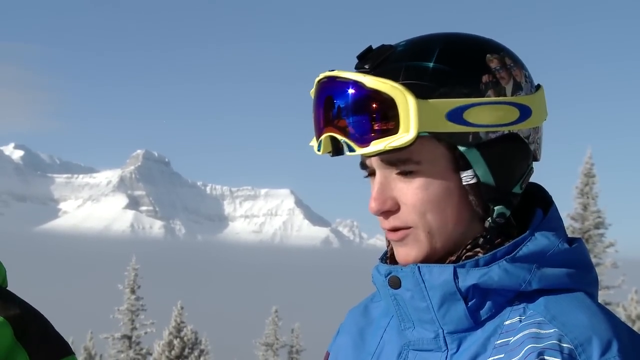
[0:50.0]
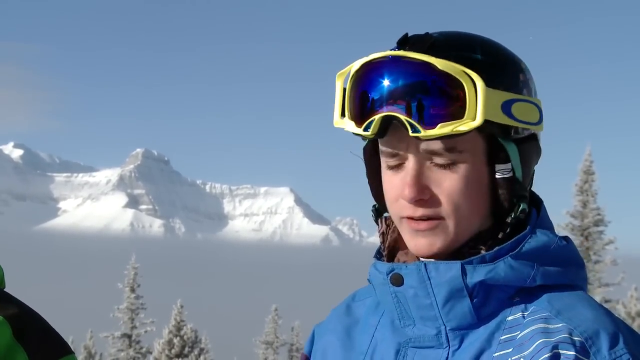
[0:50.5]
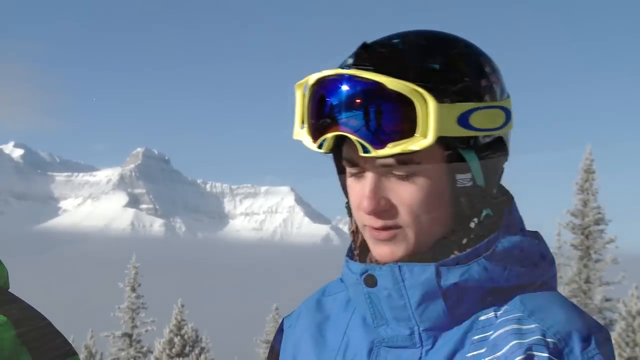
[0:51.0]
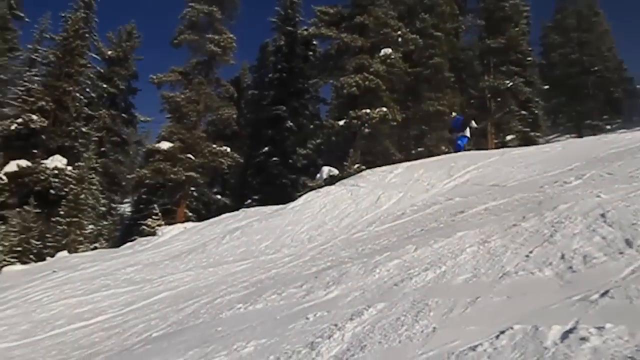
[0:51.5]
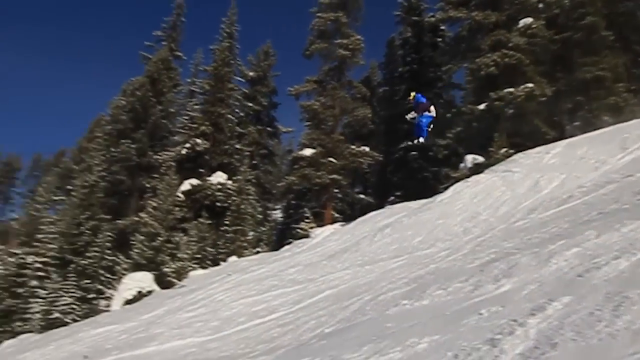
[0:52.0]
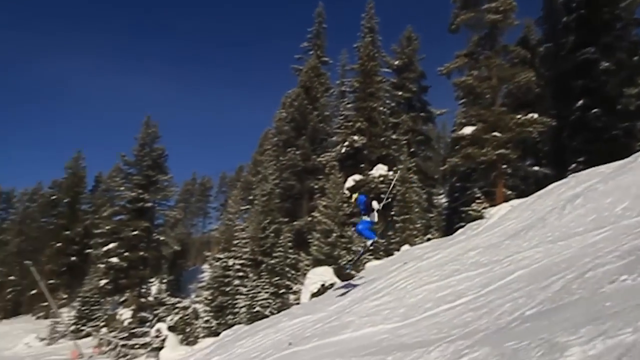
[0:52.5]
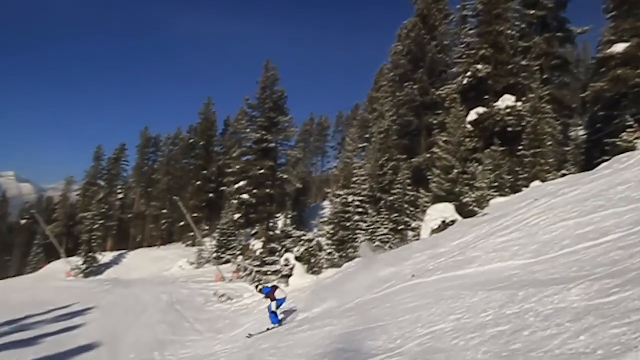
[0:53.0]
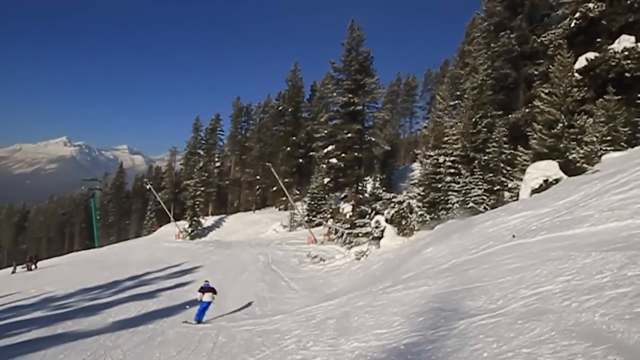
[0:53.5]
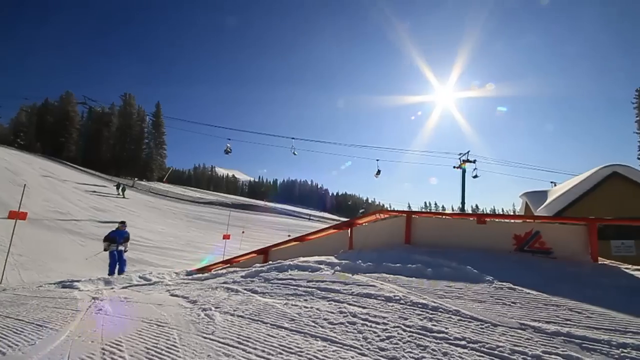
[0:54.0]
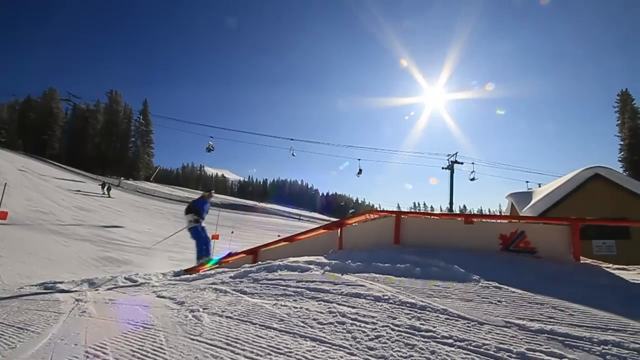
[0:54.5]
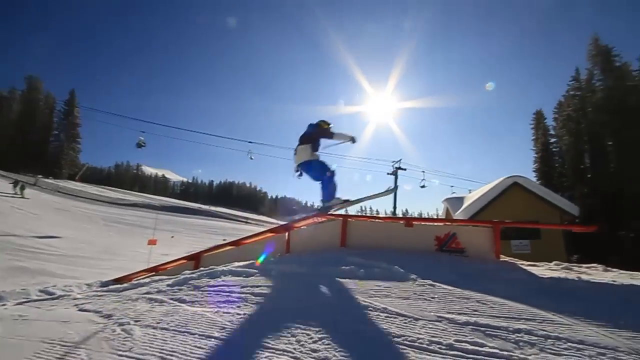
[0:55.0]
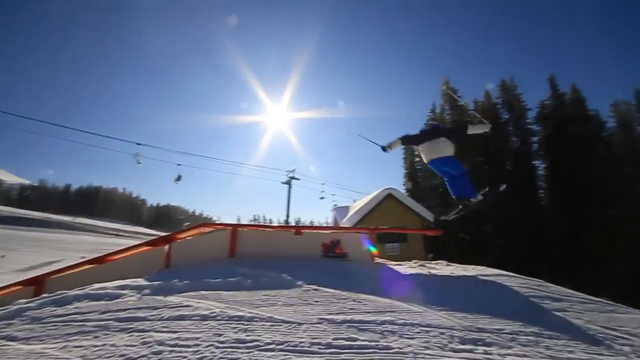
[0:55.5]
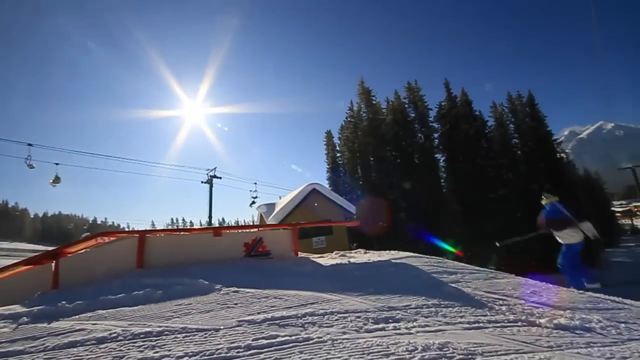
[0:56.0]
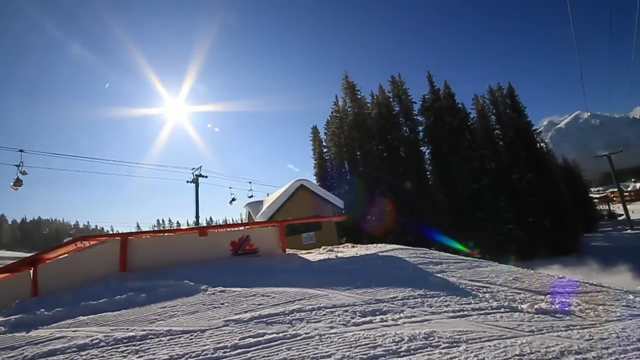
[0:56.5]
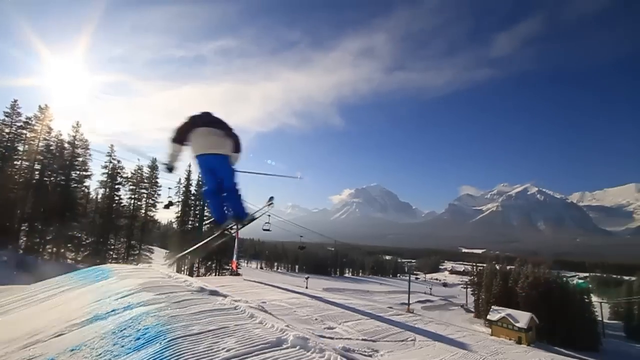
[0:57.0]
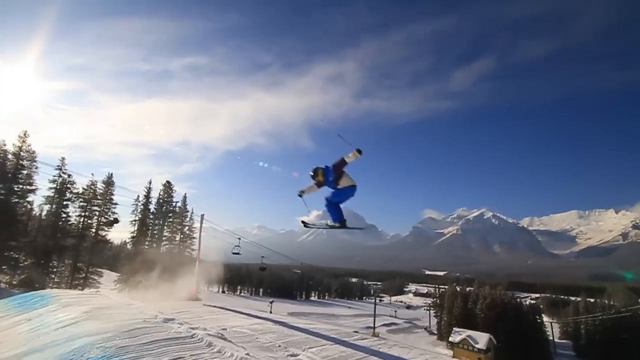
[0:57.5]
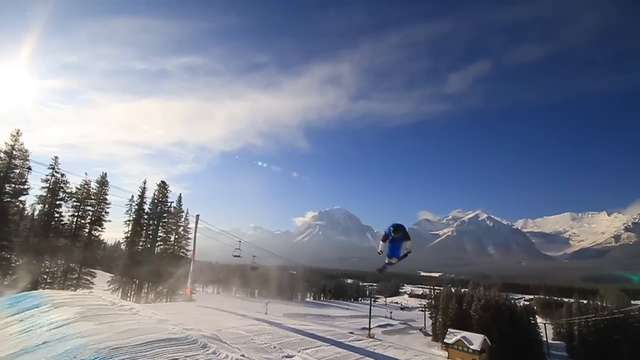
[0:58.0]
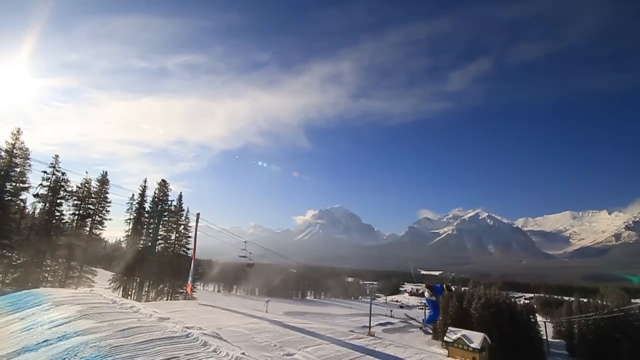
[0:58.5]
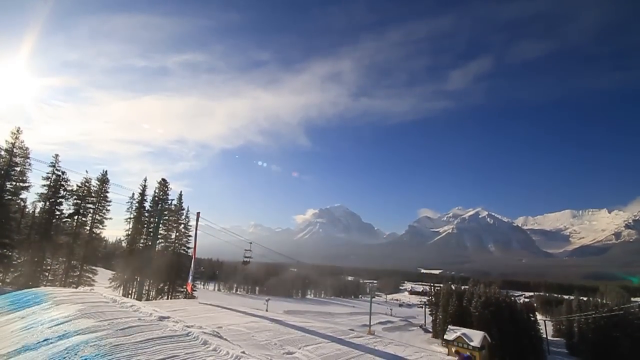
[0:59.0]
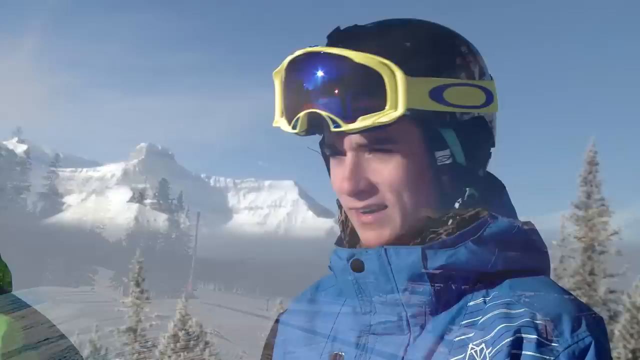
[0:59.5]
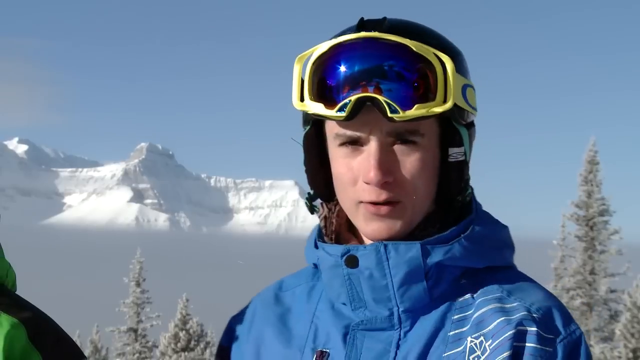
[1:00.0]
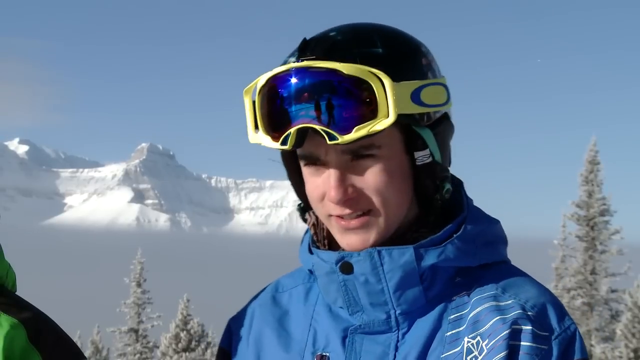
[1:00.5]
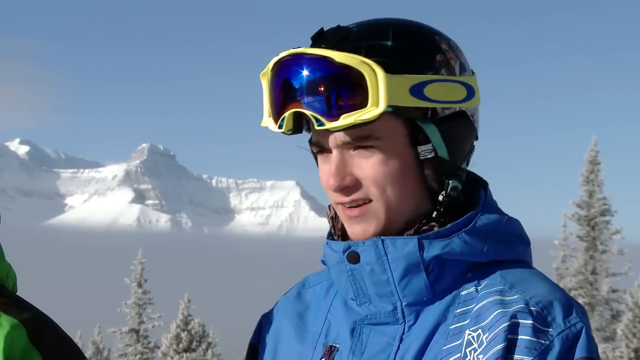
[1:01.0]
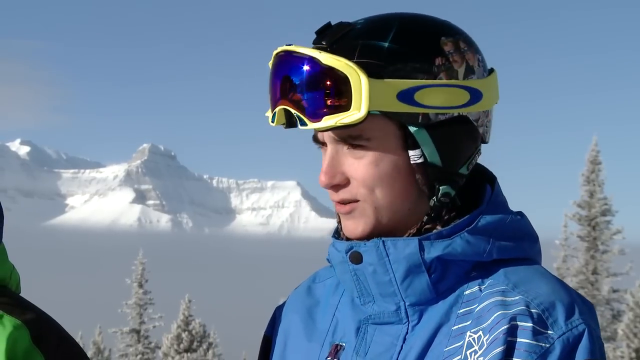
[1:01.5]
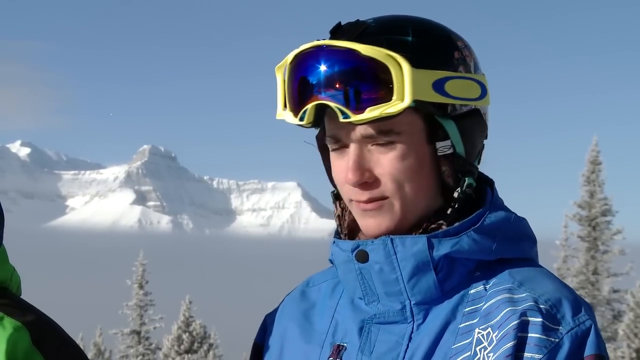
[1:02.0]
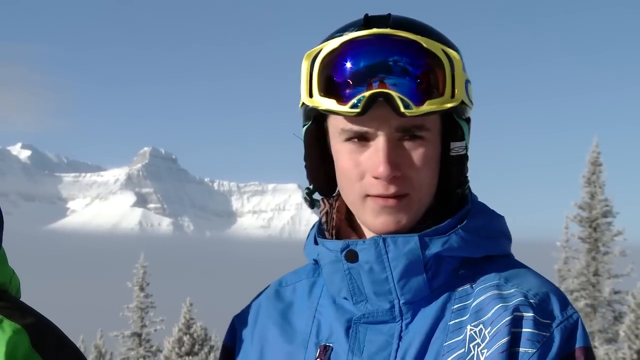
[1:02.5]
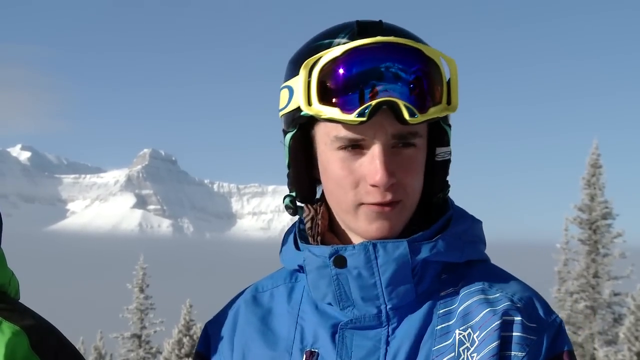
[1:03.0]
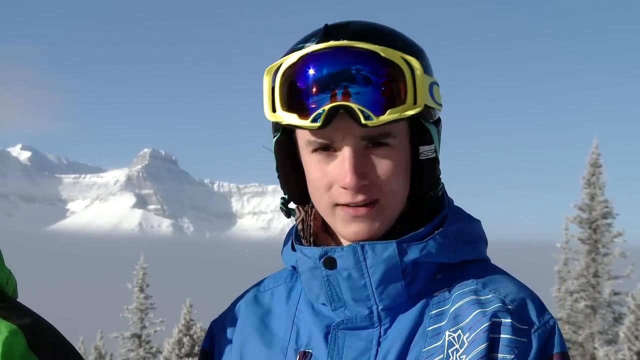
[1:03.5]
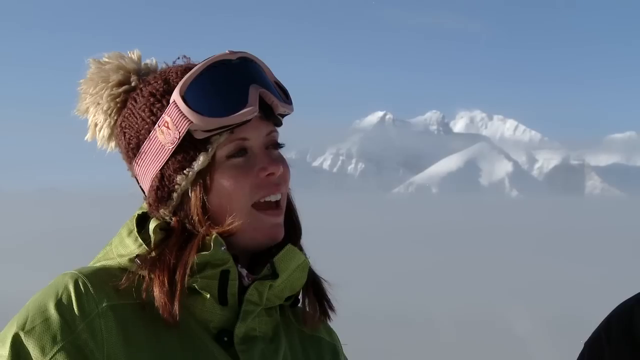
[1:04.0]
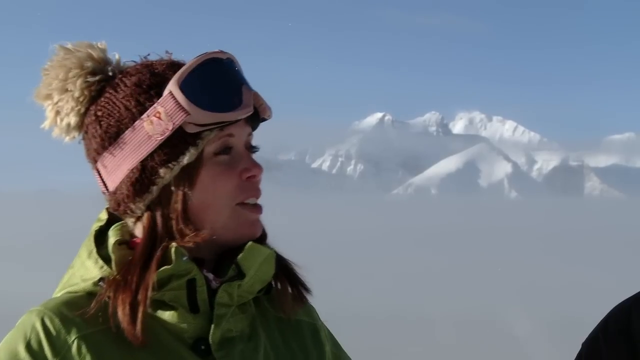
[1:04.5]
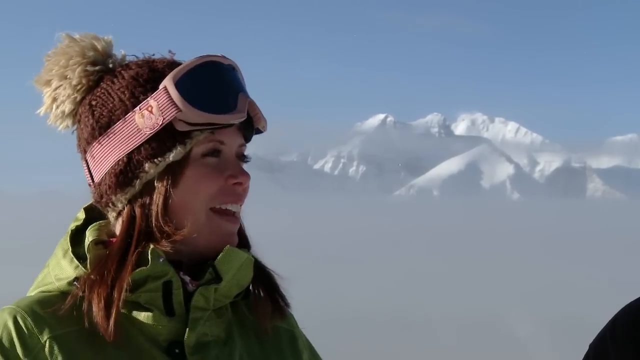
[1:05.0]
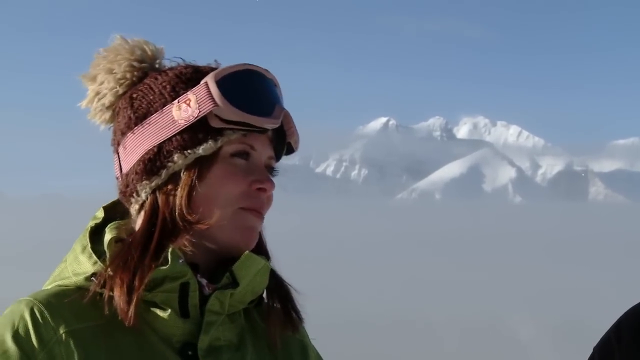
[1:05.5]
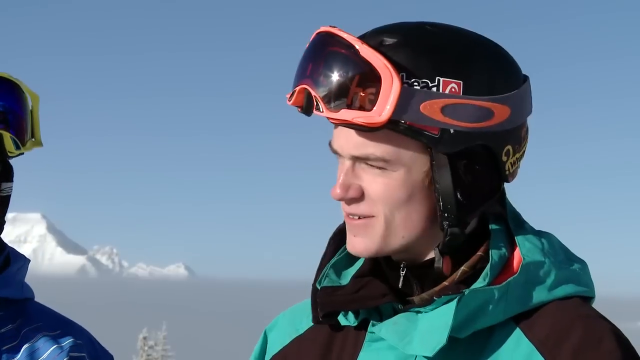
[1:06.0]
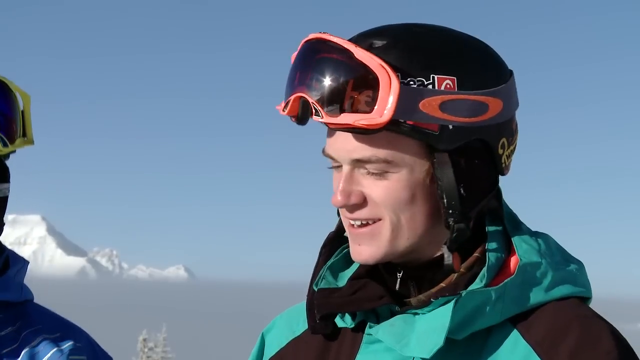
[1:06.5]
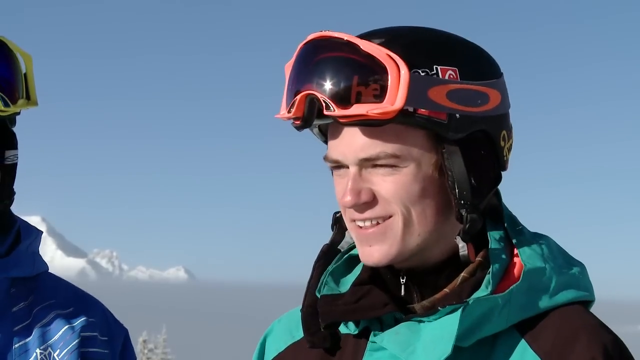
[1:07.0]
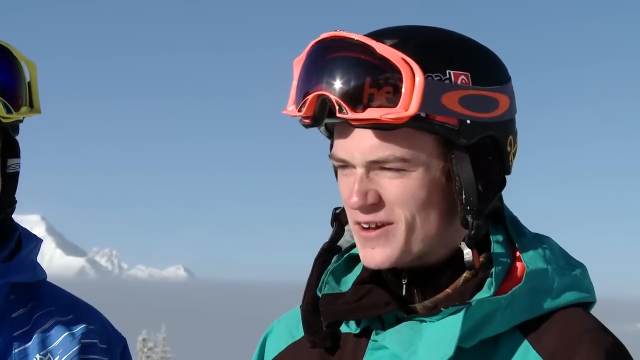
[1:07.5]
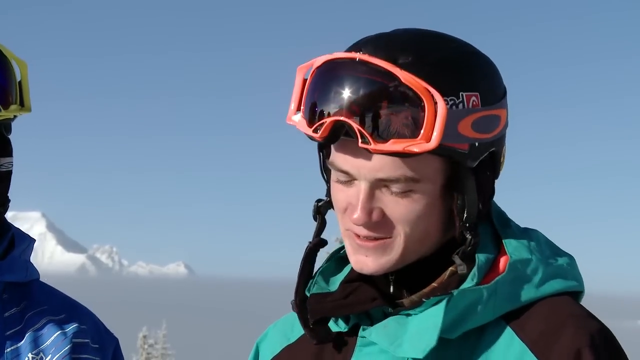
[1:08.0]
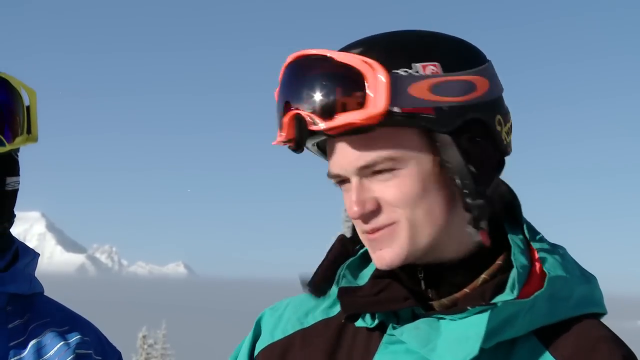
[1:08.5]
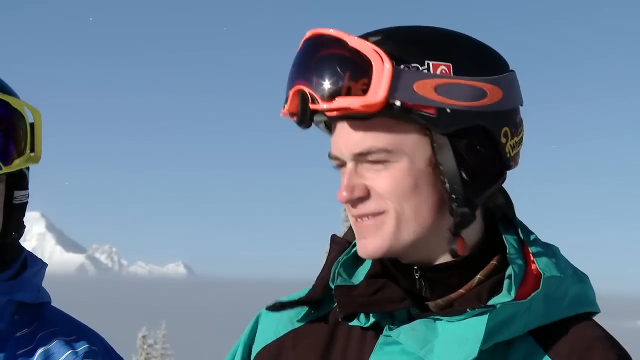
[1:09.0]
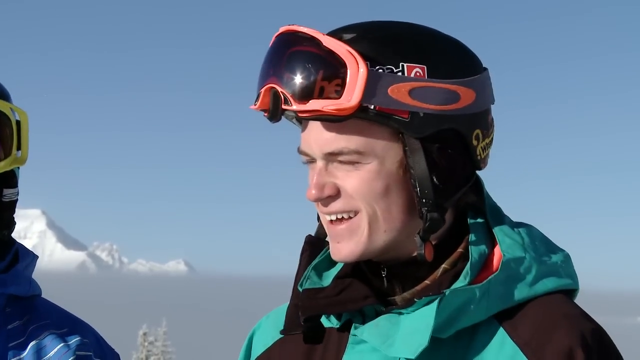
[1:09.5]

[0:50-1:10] The kid in the blue jacket with orange-yellow ski goggles is on the right, looking toward the left, with the mountain range in the background and the sun reflecting off the snow. He briefly turns to look at the camera. He is then shown going down a ski hill, jumping and doing tricks on a rail, then doing a trick off another feature. The video cuts back to him talking, turning to look at the camera every once in a while, then to a shot looking at the woman on the right. Then the kid in the gray and black jacket is shown, with the kid in blue visible on the left.